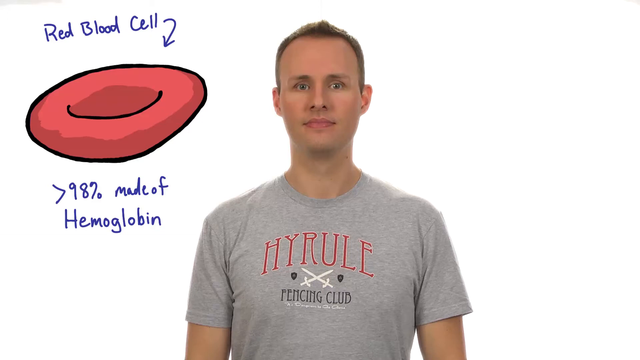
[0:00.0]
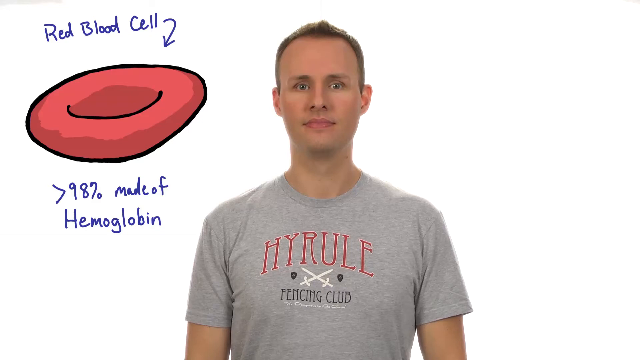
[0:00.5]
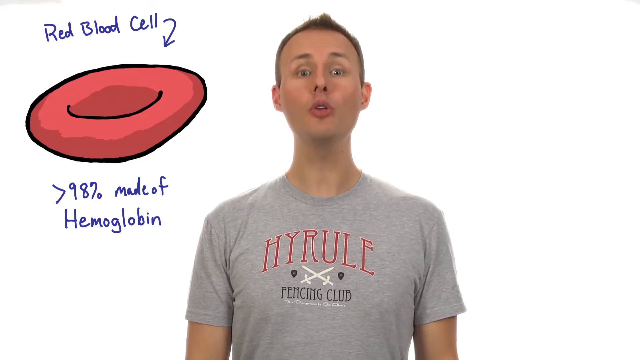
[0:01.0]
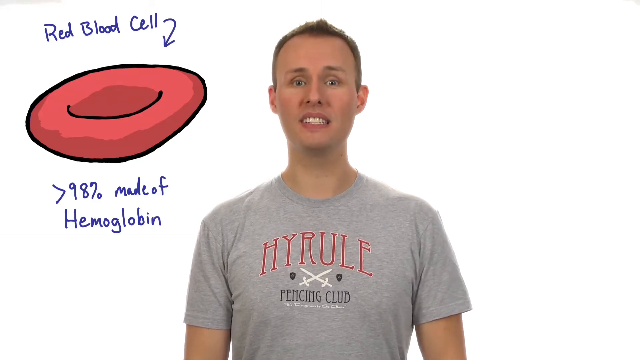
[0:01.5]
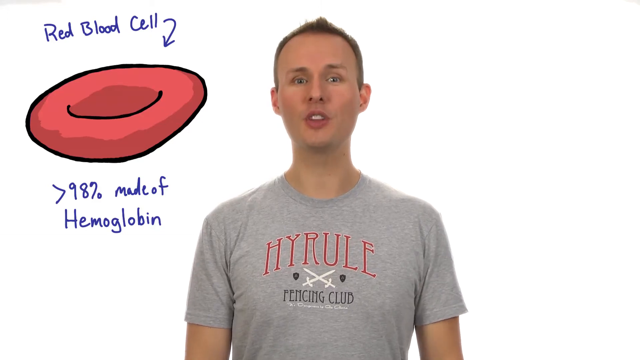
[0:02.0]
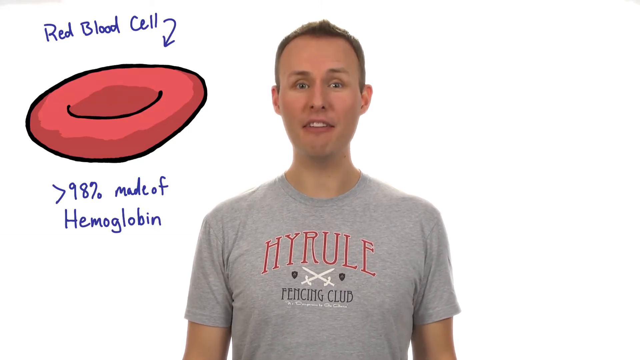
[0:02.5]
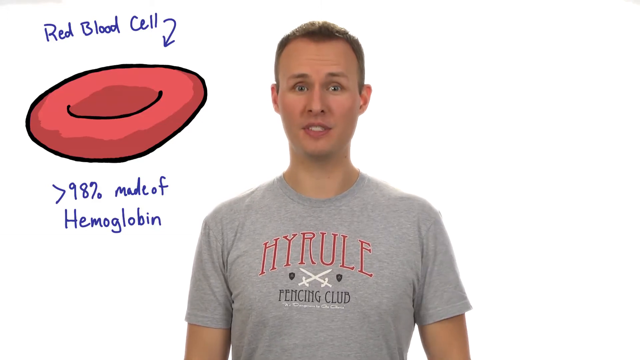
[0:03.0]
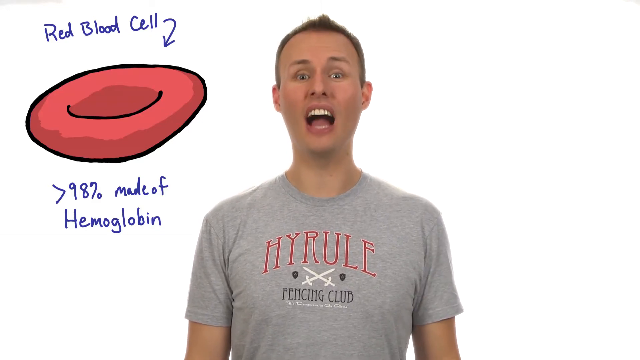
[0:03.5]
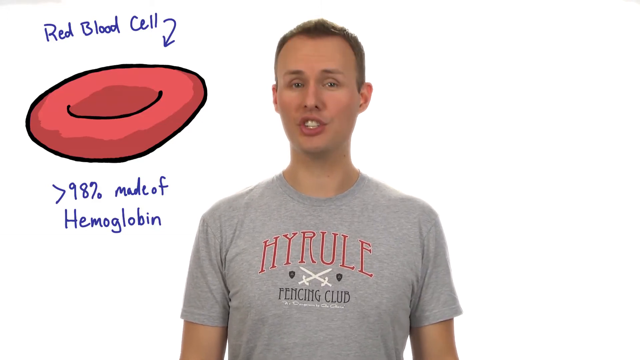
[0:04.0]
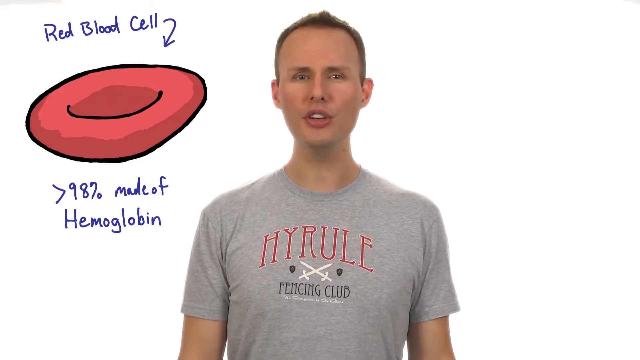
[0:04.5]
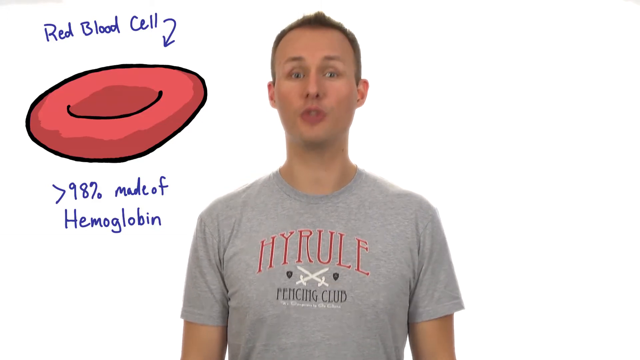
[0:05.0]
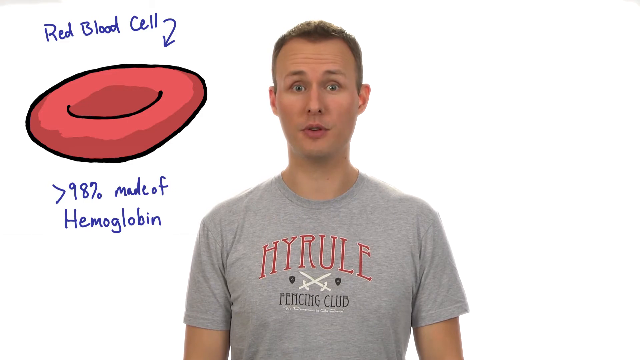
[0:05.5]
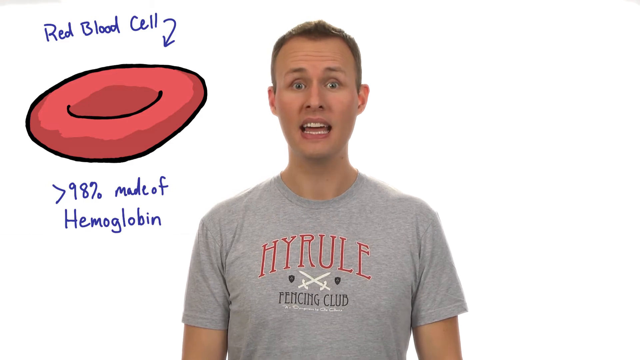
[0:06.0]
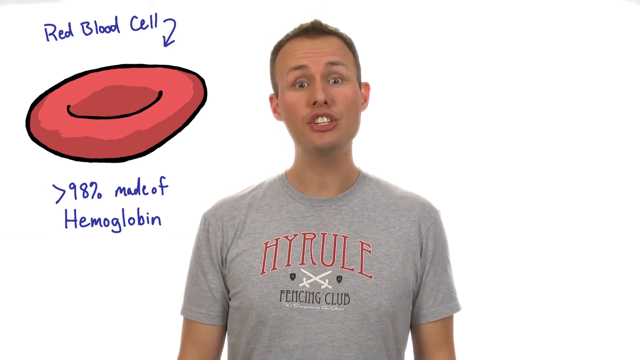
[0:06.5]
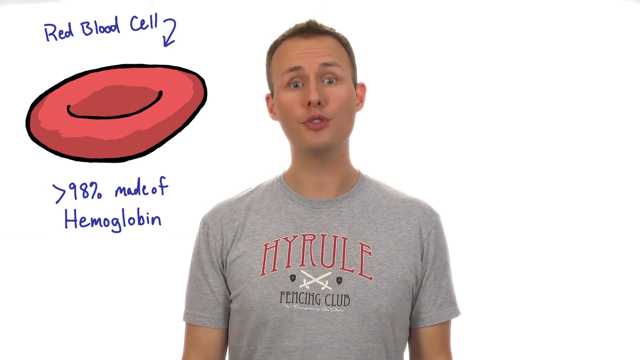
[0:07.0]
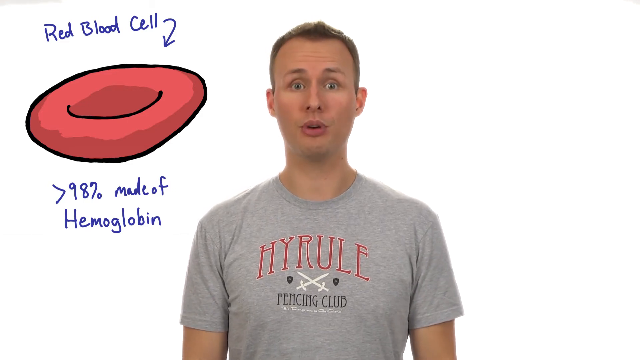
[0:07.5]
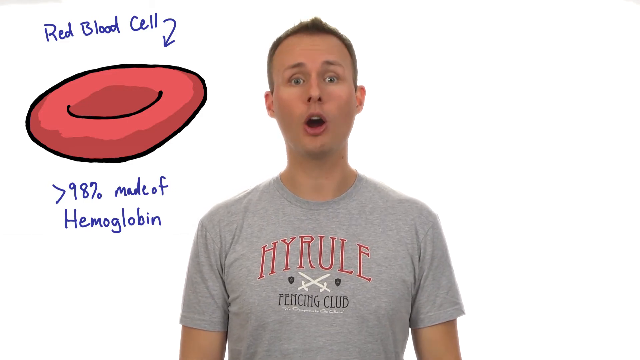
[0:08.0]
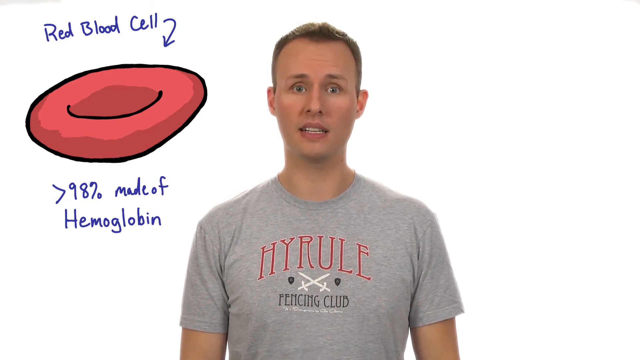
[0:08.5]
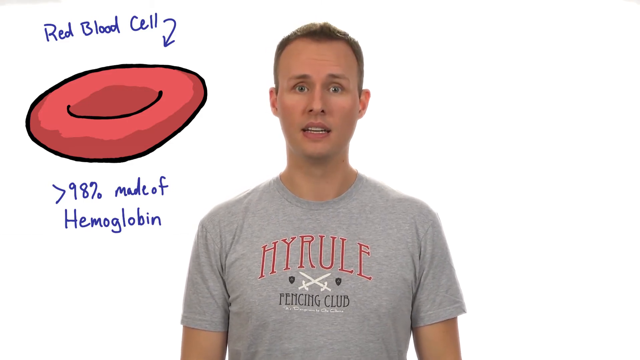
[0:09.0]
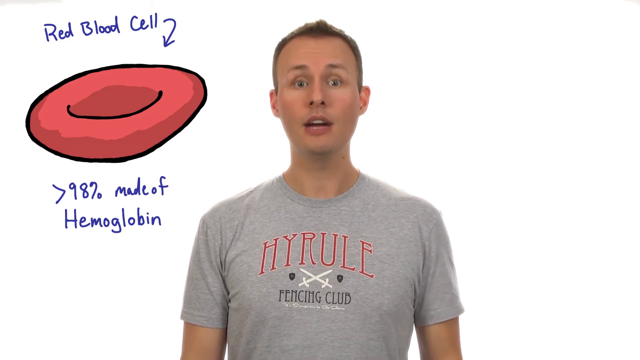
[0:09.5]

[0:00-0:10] This educational video about red blood cells features a host, a thin man maybe in his 30s, wearing a t-shirt that reads "Hyrule" (spelled H-Y-R-U-L-E) in red, with two white swords forming an X below the name and "fencing club" below that. He stands in front of a white screen. On his left is a colored sketch of a red blood cell, with the label "red blood cell" and an arrow pointing to the diagram in blue, plus a line below the diagram that reads "greater than 98 percent made of hemoglobin." The host looks very animated, moving his eyebrows a lot and making very expressive facial expressions, but he barely moves his body.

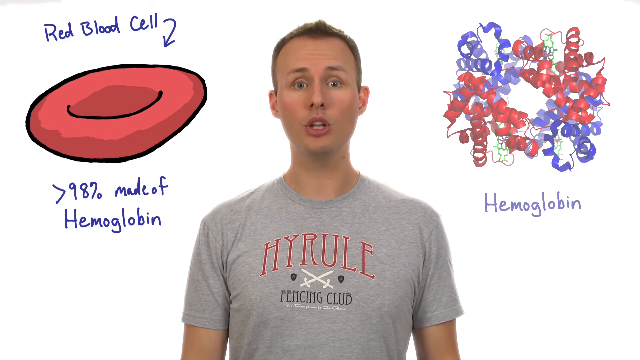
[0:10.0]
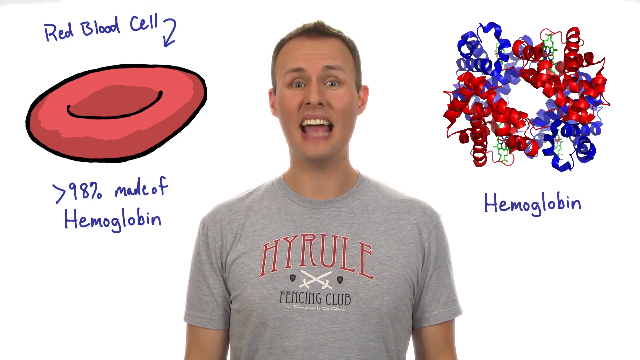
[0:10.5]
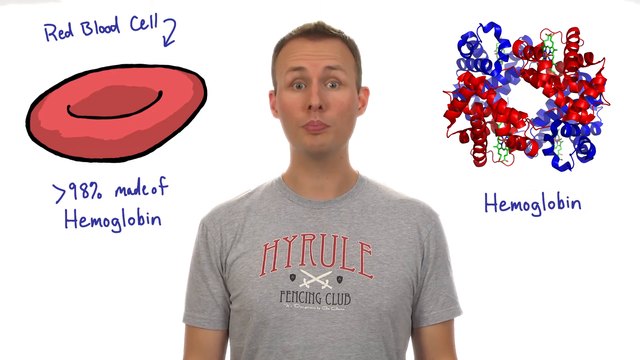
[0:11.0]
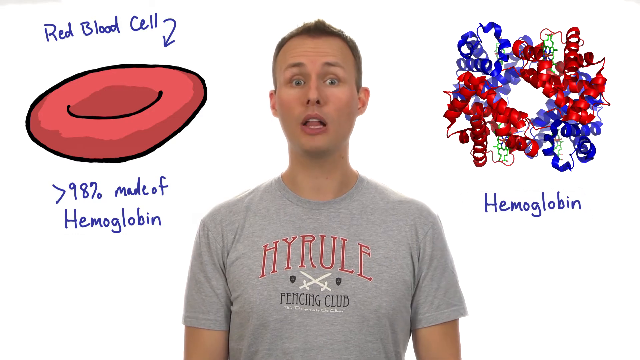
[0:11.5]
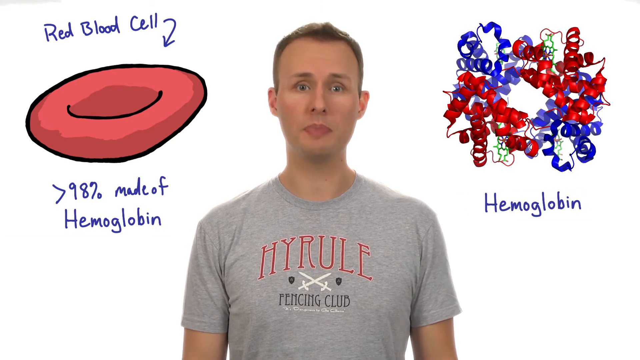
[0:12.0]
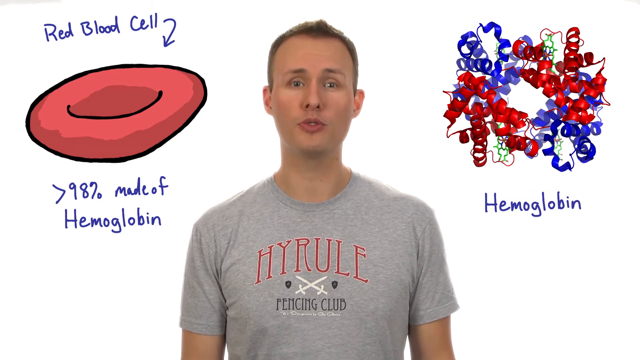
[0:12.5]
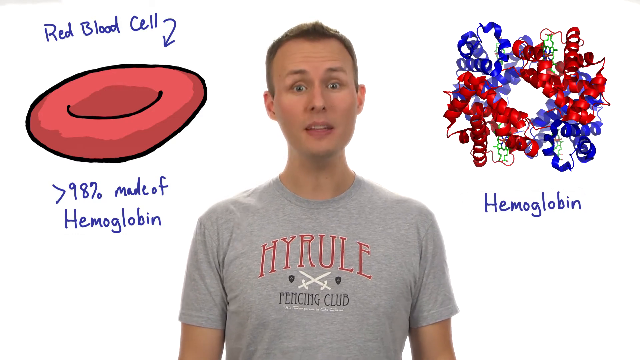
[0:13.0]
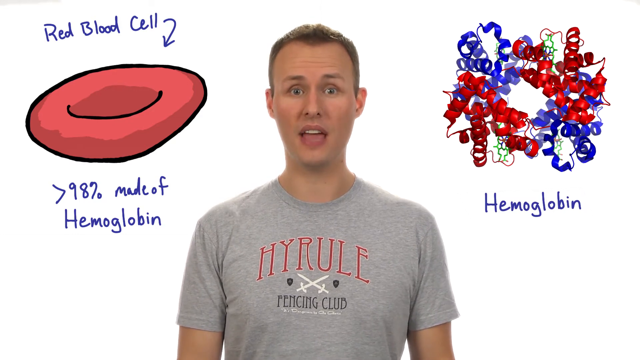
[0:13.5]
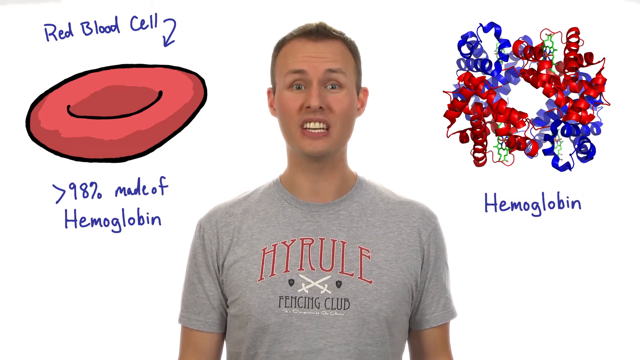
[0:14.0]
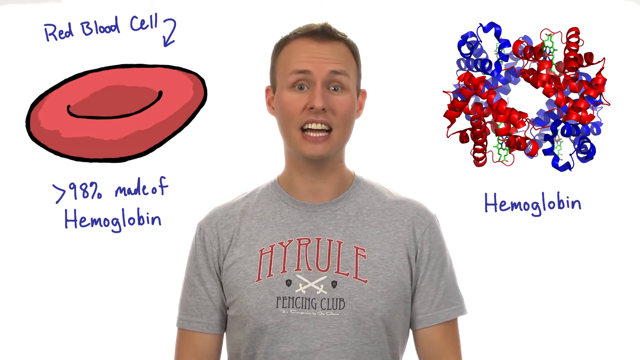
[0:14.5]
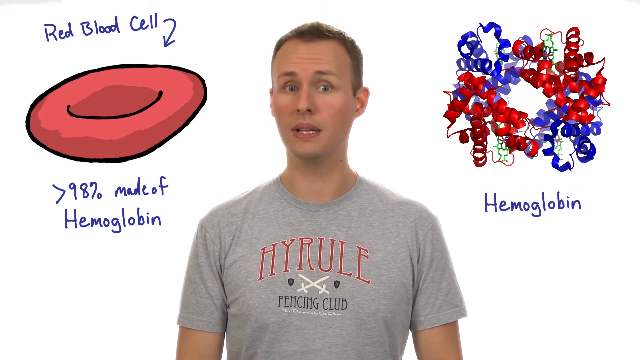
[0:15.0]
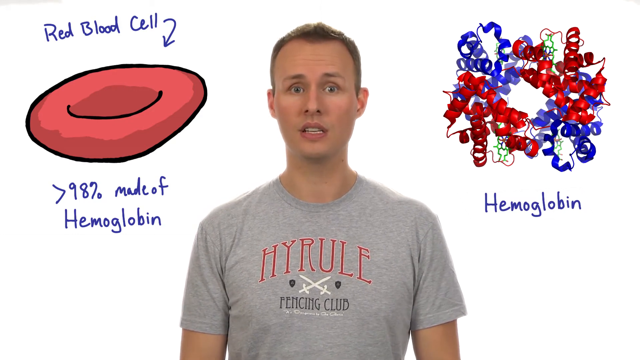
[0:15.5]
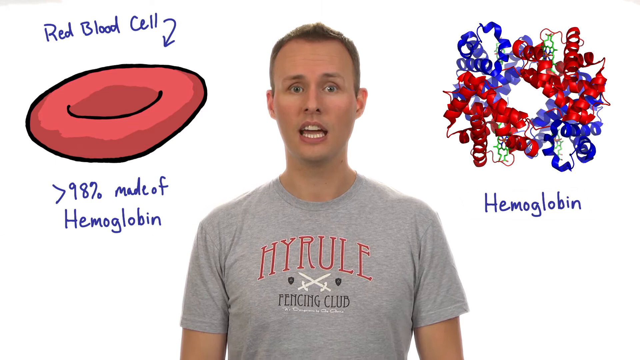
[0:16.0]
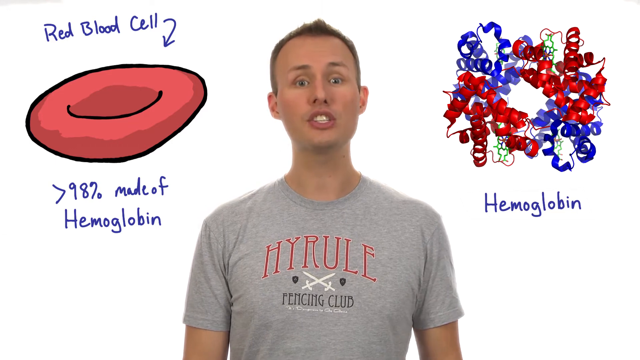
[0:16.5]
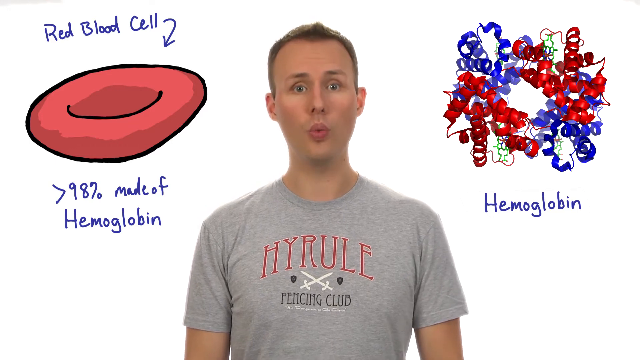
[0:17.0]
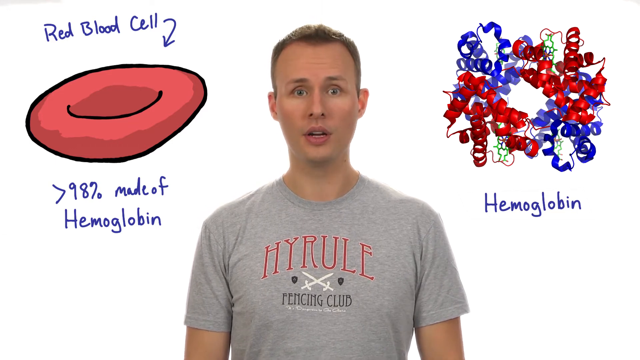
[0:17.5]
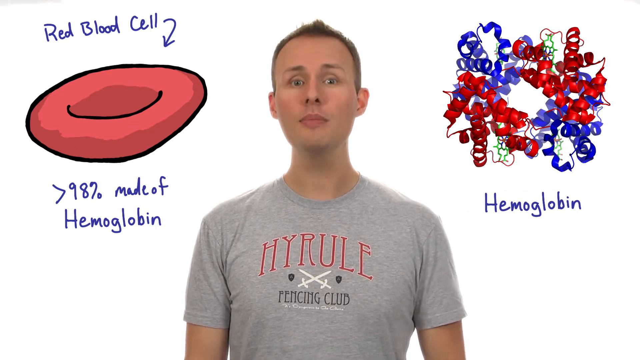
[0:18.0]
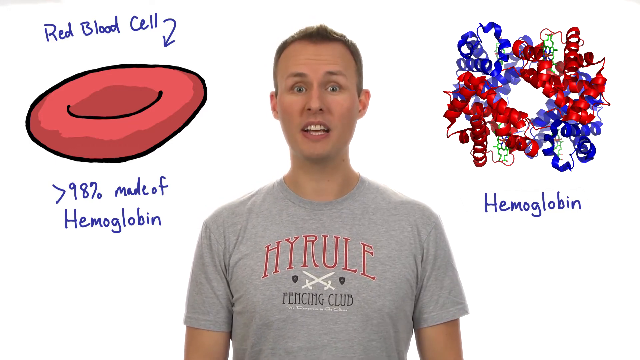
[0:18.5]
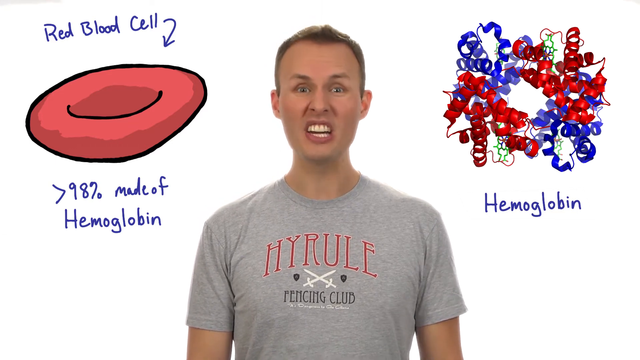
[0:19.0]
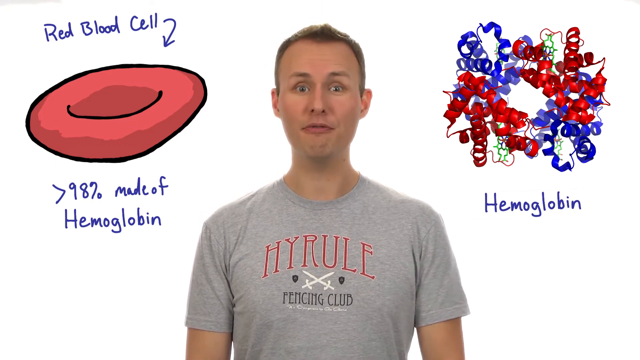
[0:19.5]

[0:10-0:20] A new diagram is added on the host's right, showing hemoglobin made of red and blue ribbon-like structures. Then both diagrams disappear, leaving him standing in front of a white screen. The camera zooms in on his face as he keeps talking, clearly enunciating his words judging by his lip movements. He barely blinks and looks like he is reading off a teleprompter. For about 10 seconds after the diagrams disappear, he talks nonstop.